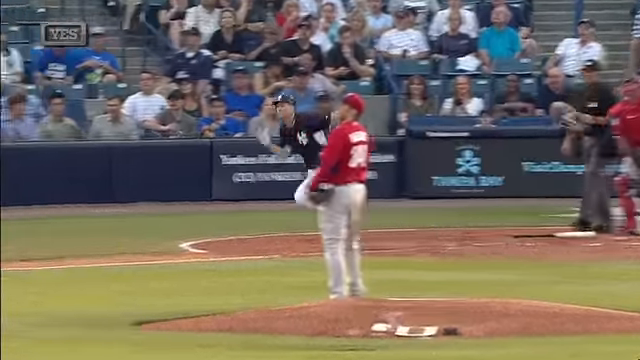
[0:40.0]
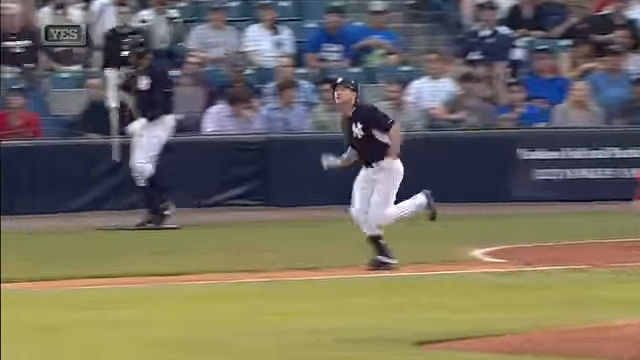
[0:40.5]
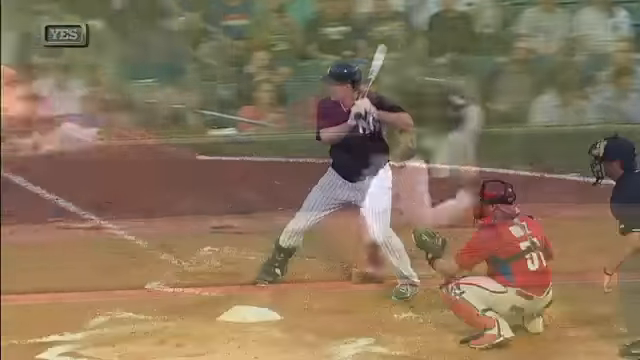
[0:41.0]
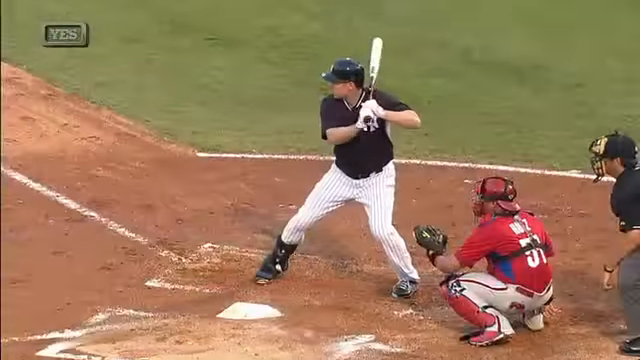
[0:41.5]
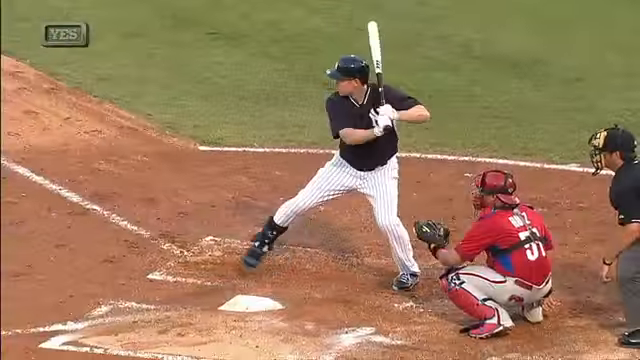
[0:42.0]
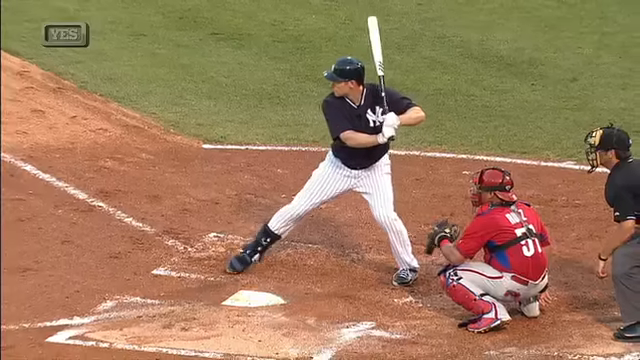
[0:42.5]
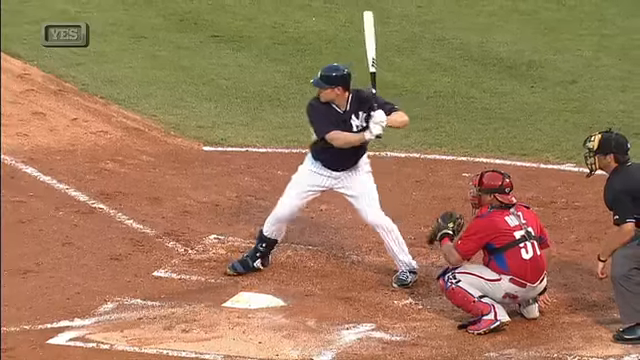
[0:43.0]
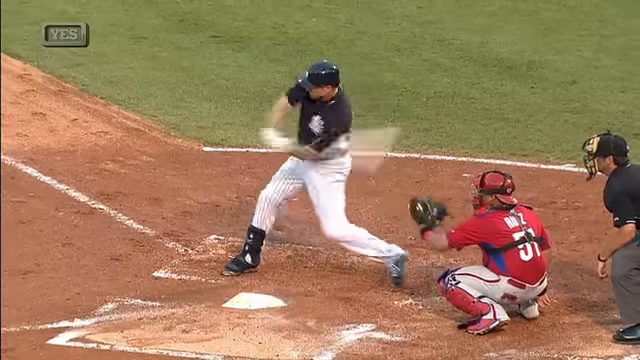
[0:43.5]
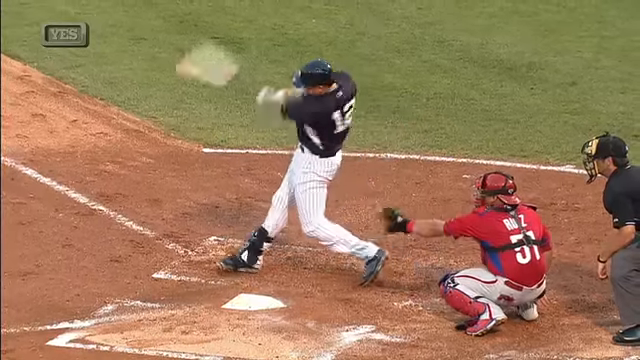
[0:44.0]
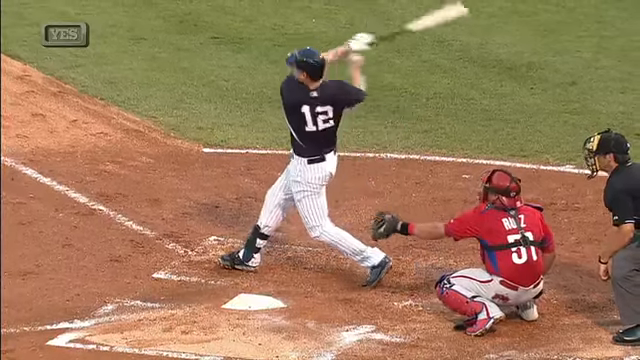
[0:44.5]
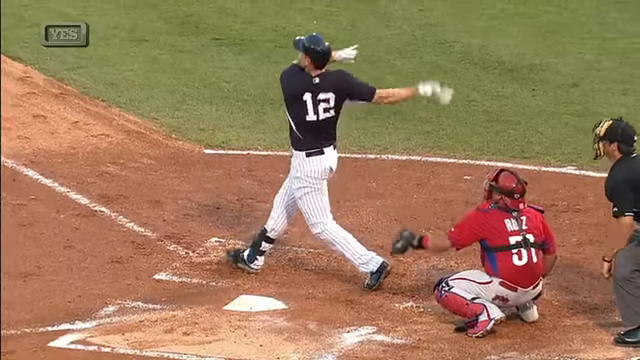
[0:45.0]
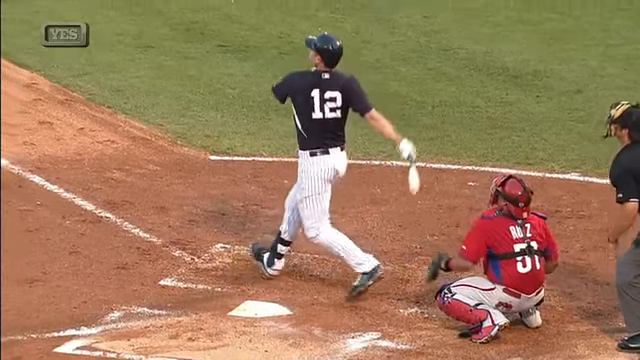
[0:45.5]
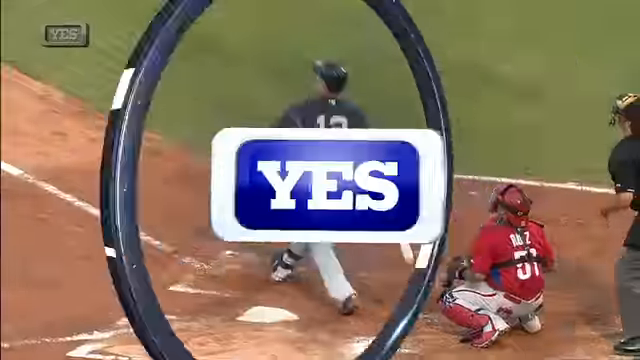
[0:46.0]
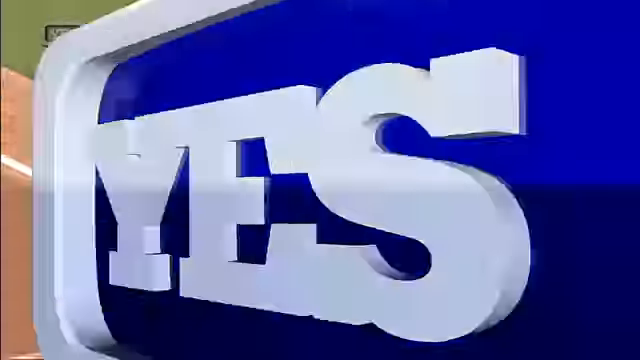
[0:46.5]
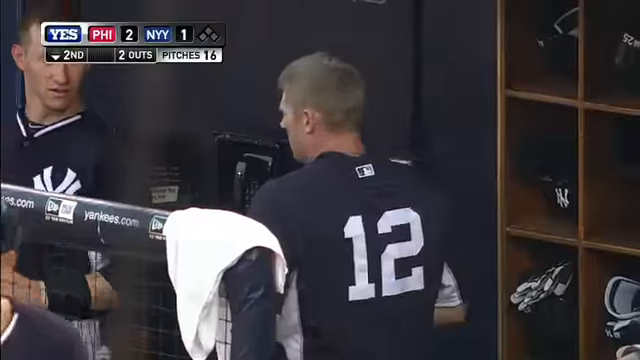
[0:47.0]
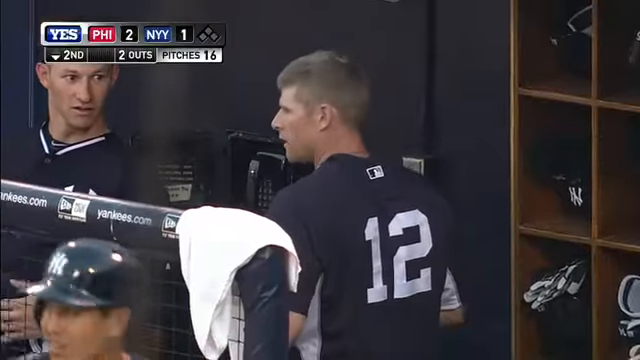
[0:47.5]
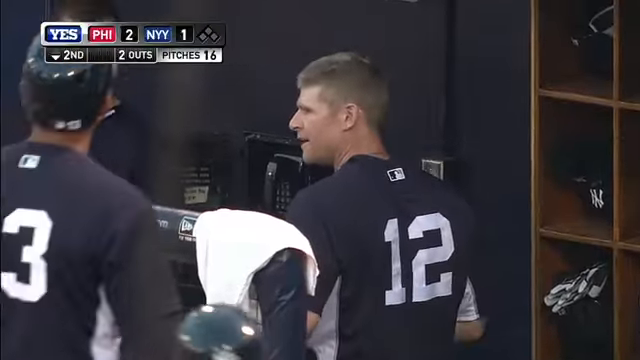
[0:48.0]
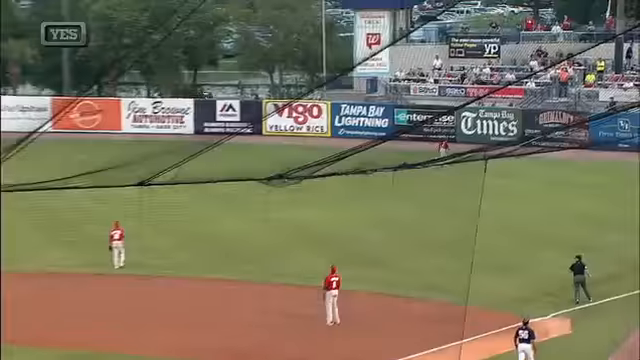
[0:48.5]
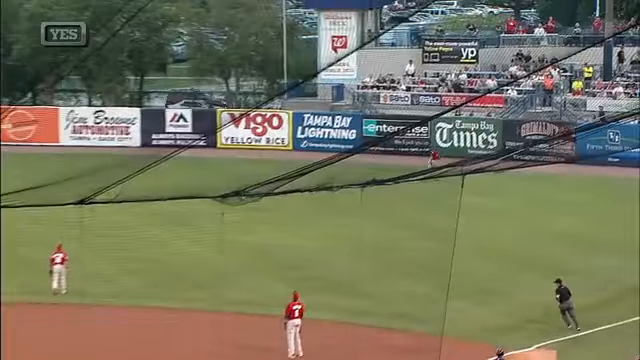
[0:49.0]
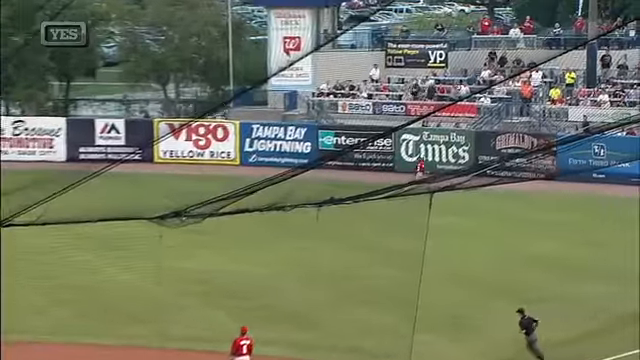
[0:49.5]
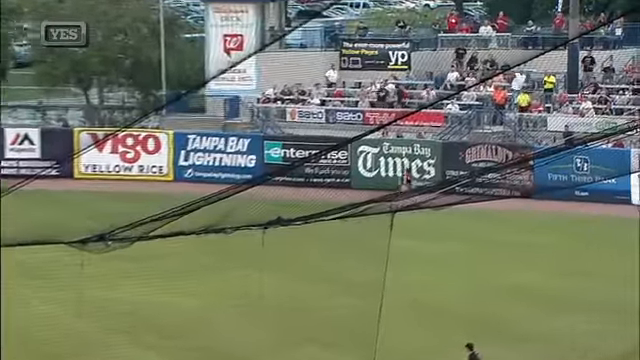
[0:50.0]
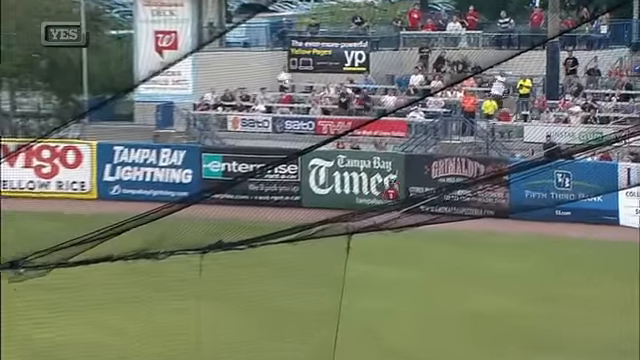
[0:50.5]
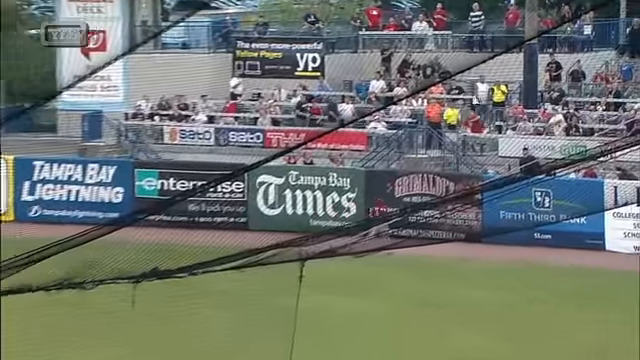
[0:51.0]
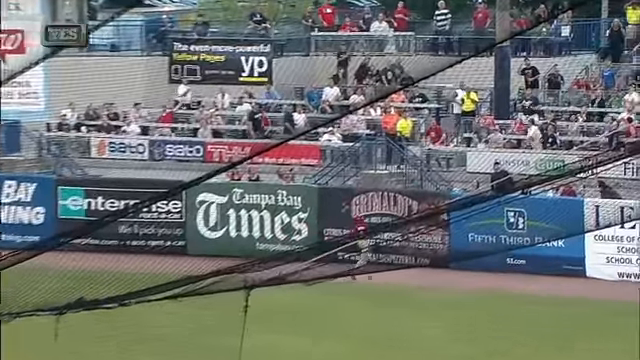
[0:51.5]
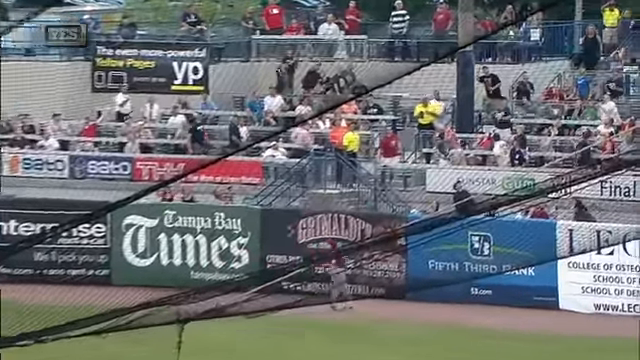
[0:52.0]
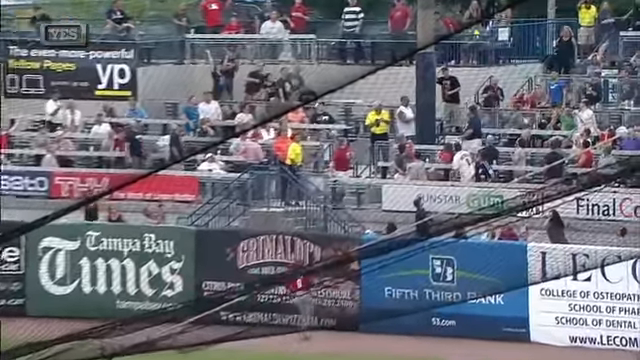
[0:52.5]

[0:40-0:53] Number 12 for the New York Yankees faces the Philadelphia pitcher and makes a massive hit. A slow-motion shot shows his swing, with his bat going really close to the catcher. The ball goes way out into the crowd, and the Philadelphia team on the ground can only look and follow the arc of the ball. Number 12 is then shown in the dugout having a drink, followed by a replay of his run around the pitch. The word "yes" comes onto the screen.